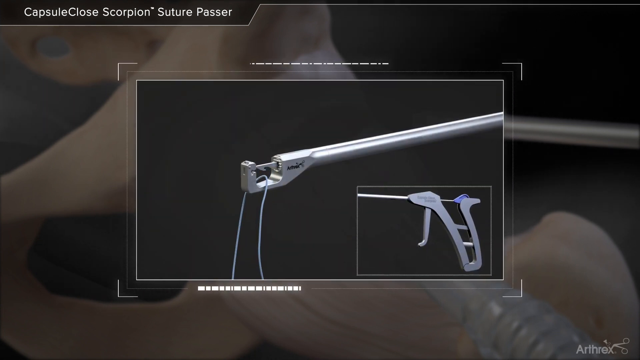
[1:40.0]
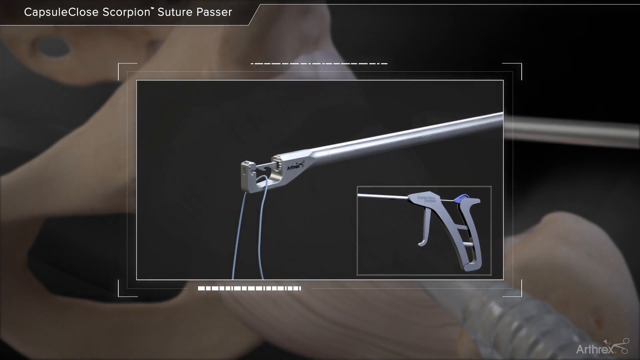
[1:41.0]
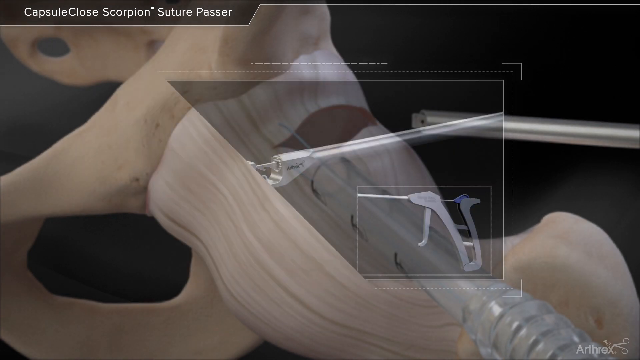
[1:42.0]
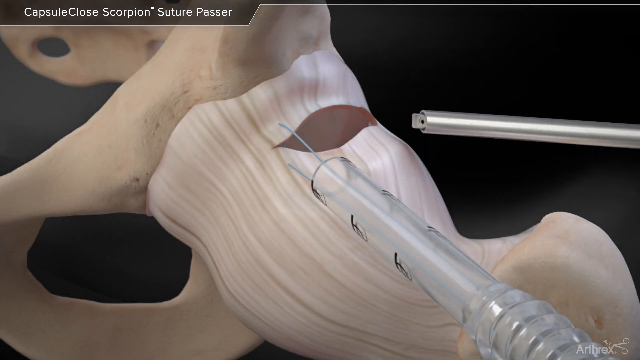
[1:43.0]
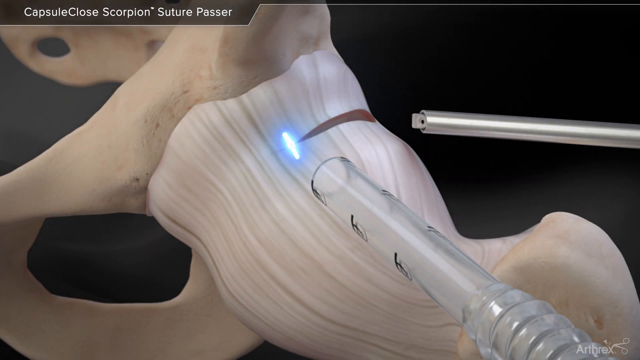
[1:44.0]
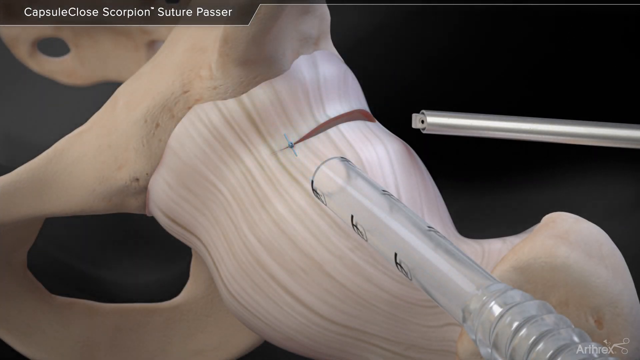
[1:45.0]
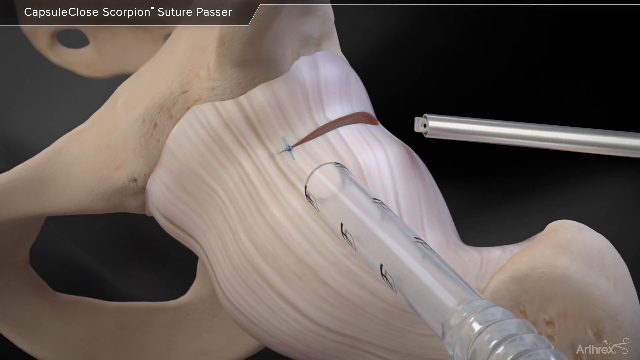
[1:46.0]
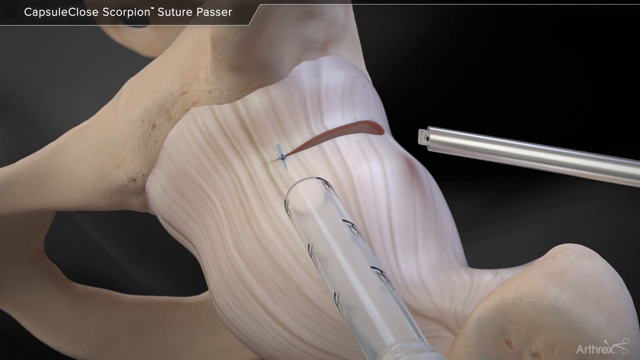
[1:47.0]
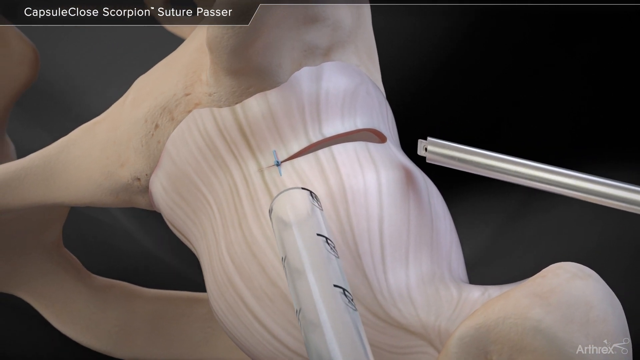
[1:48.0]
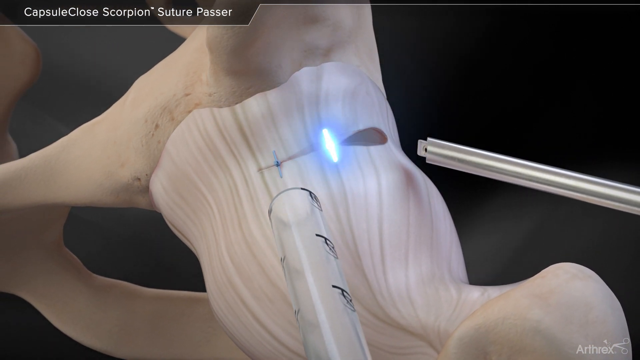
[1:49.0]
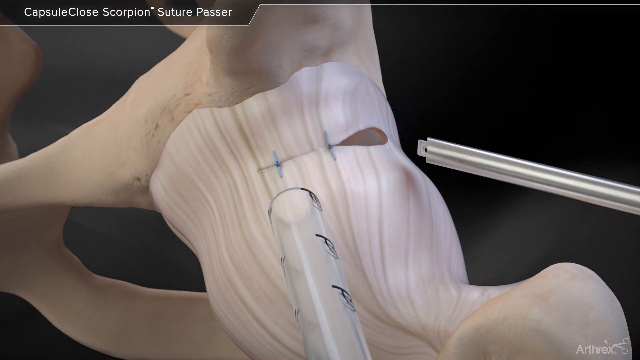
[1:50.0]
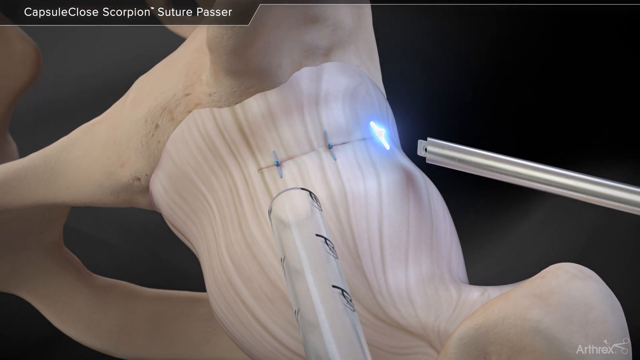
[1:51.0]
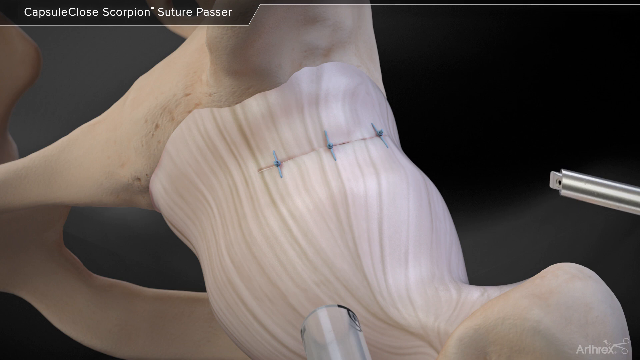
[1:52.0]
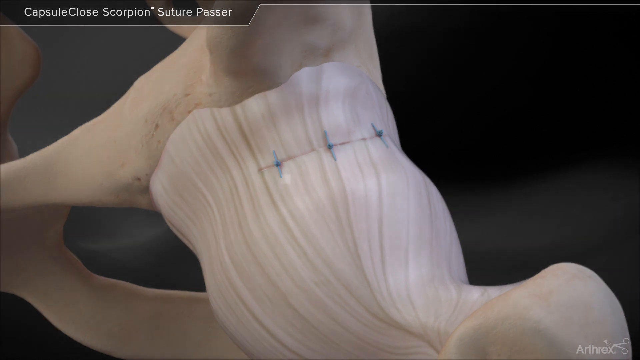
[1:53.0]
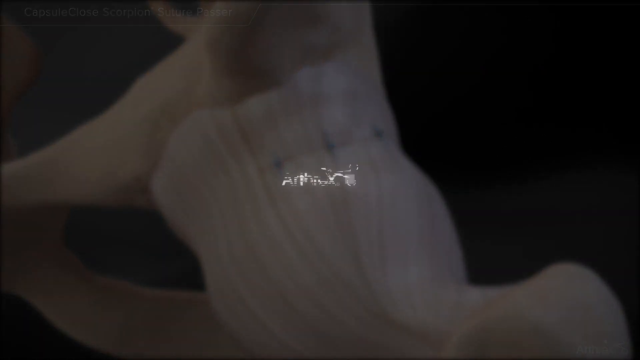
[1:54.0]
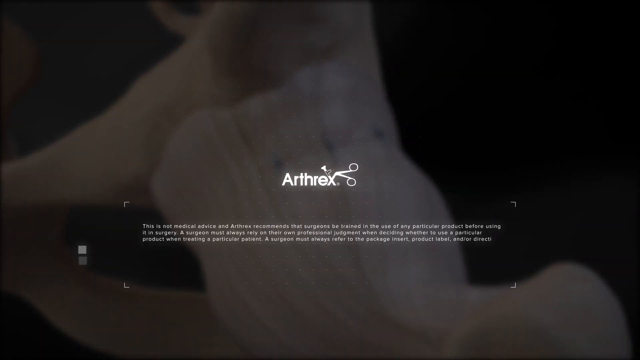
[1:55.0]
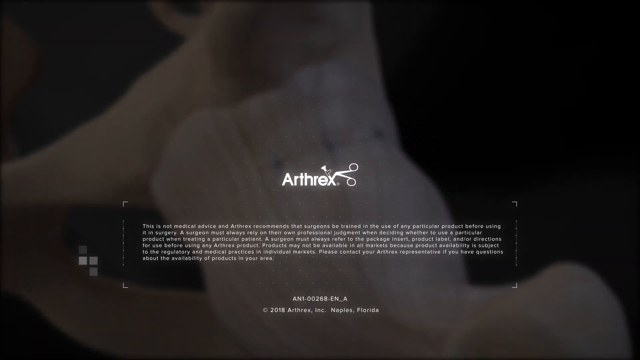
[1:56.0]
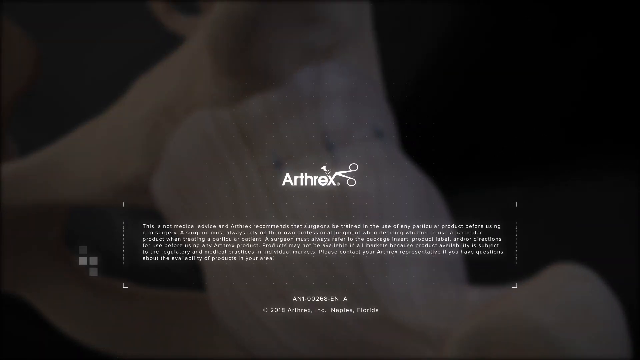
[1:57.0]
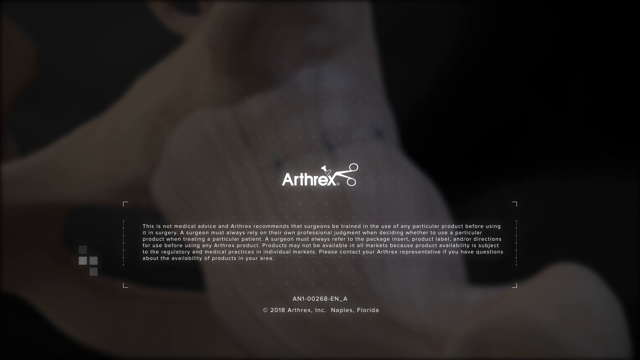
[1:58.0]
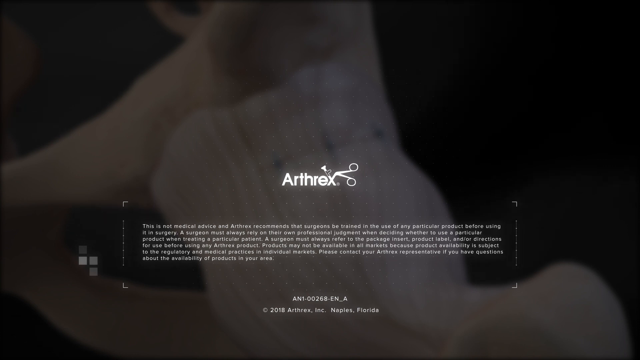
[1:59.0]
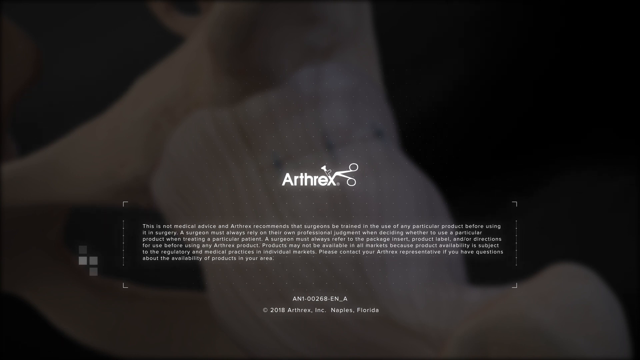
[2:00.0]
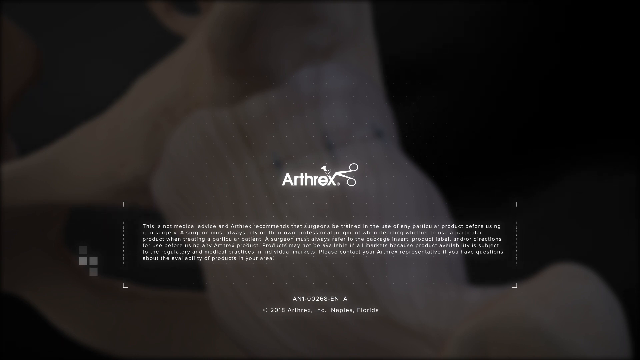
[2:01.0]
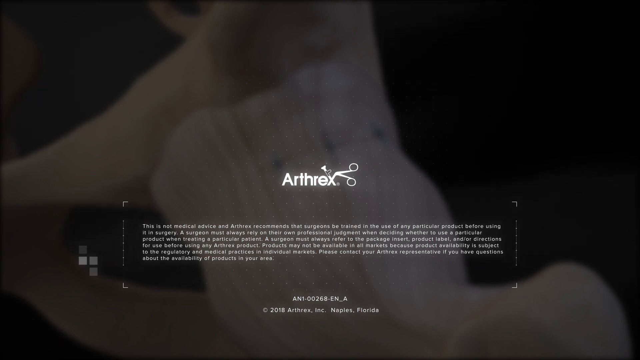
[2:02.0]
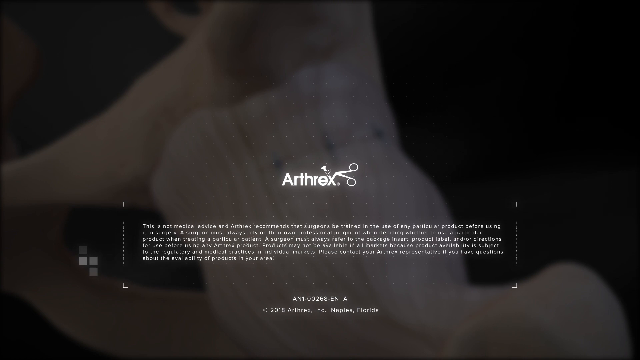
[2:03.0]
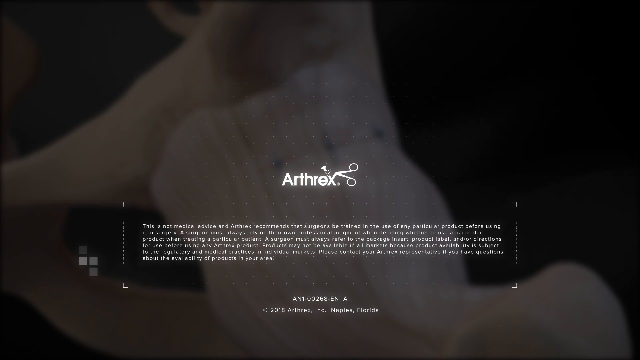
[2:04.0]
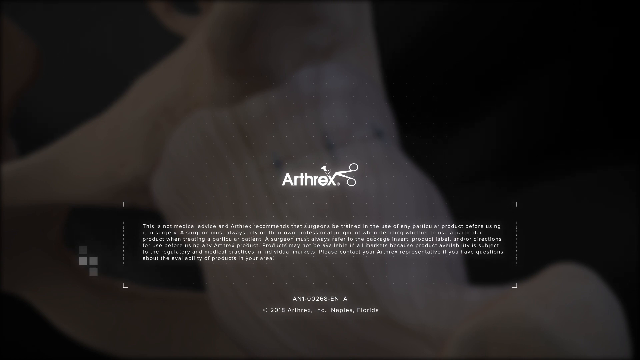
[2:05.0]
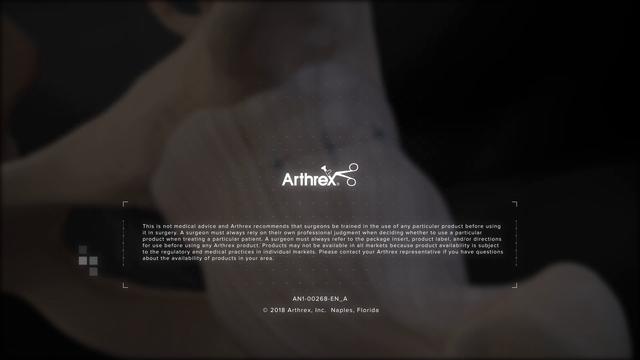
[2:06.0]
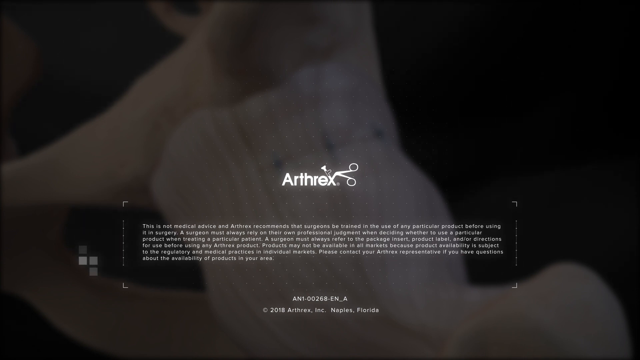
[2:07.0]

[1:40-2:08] A hook part that looks like string but is thin metal hooks onto a piece, curving into a U. It looks like surgery healing something, with about three what look almost like stitches. Then the text "Arthrex" appears with scissors going through it, possibly the name of the company. Smaller text underneath says "this is not medical advice" and that the company "recommends that surgeons be trained in the use of any particular product before using it in surgery. A surgeon must always rely on their professional judgment when deciding whether to use a particular product when treating a particular patient."